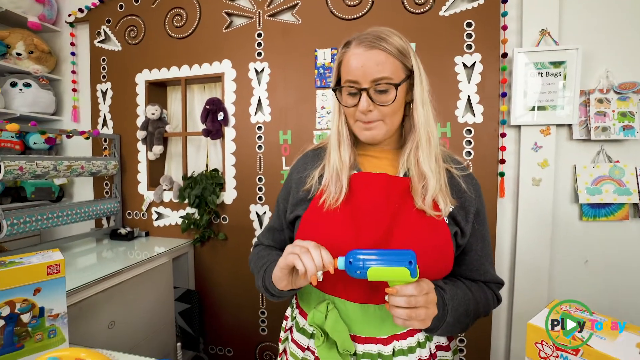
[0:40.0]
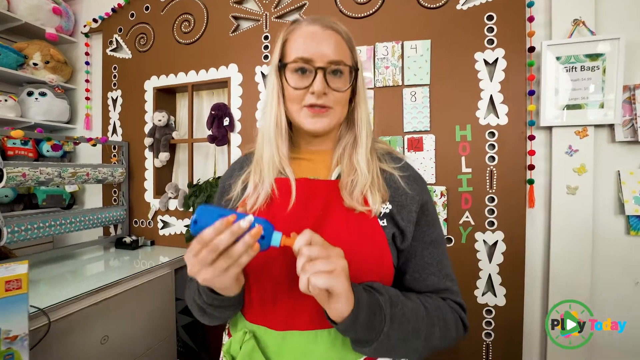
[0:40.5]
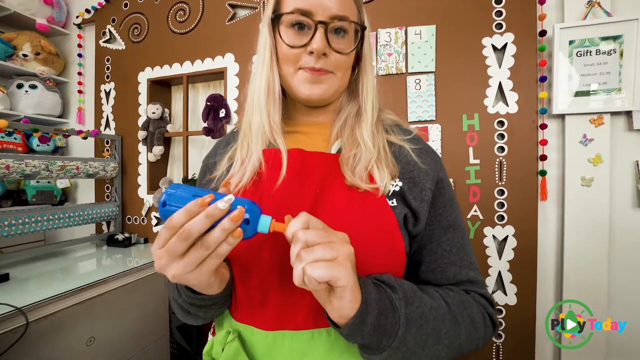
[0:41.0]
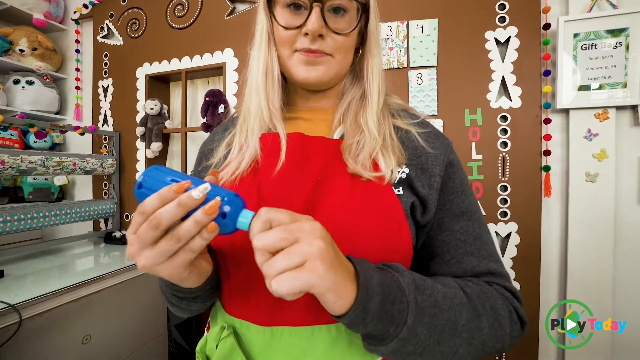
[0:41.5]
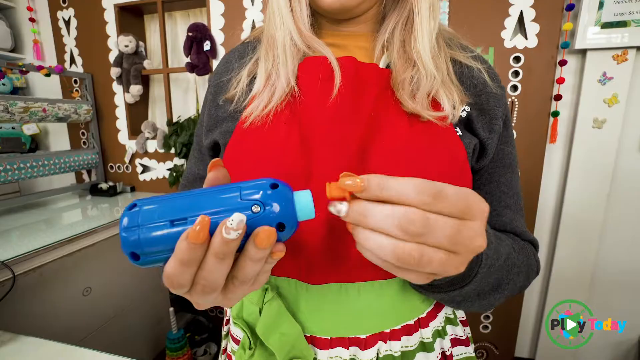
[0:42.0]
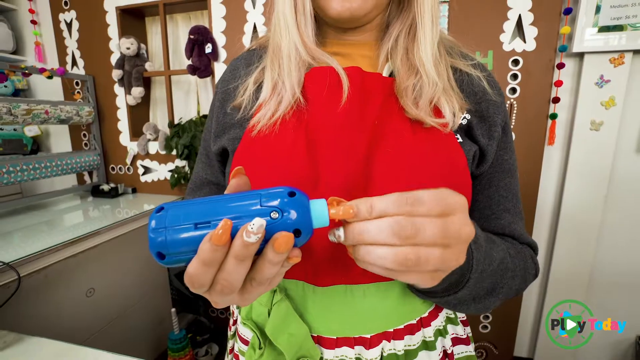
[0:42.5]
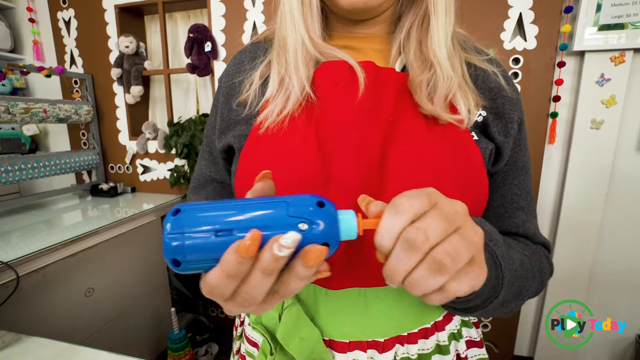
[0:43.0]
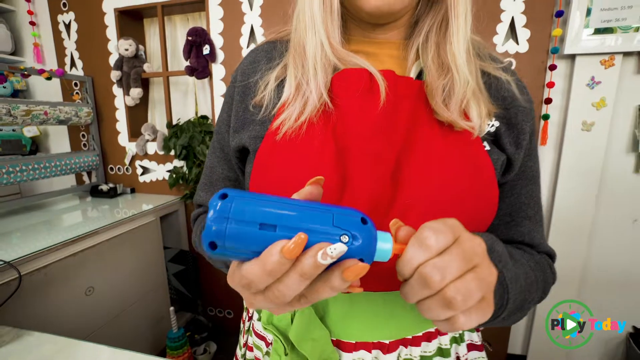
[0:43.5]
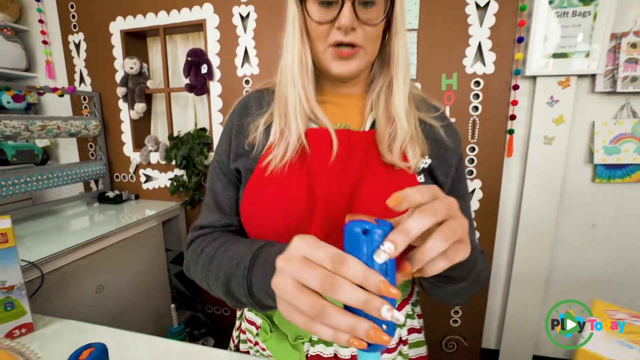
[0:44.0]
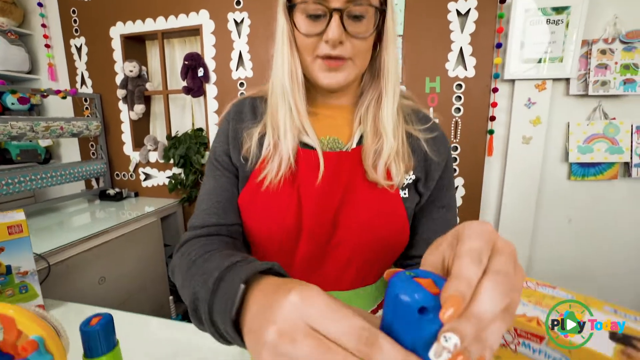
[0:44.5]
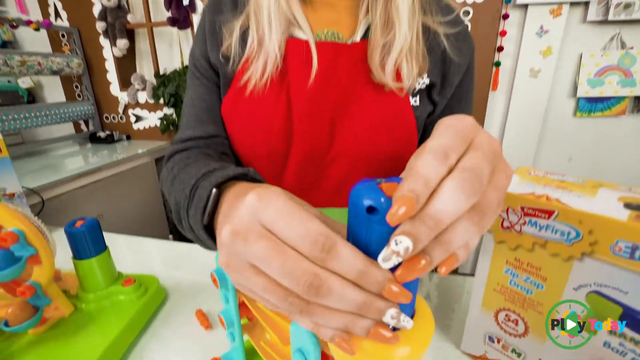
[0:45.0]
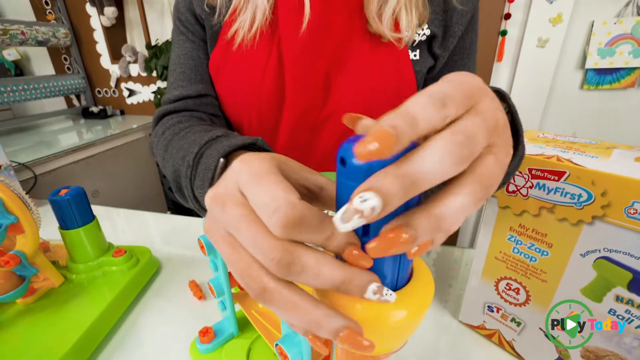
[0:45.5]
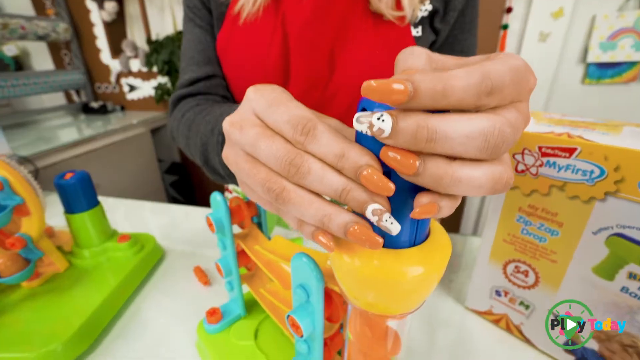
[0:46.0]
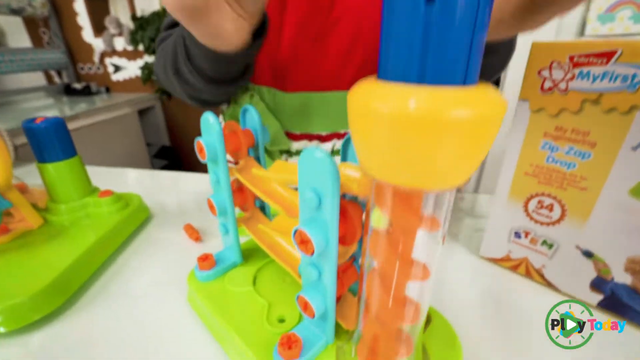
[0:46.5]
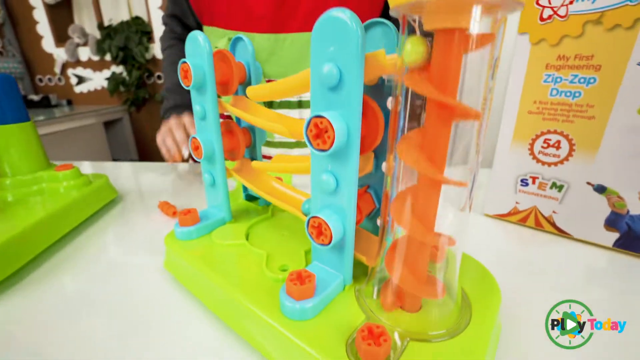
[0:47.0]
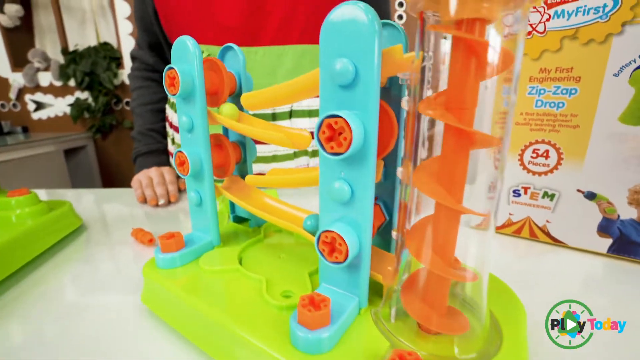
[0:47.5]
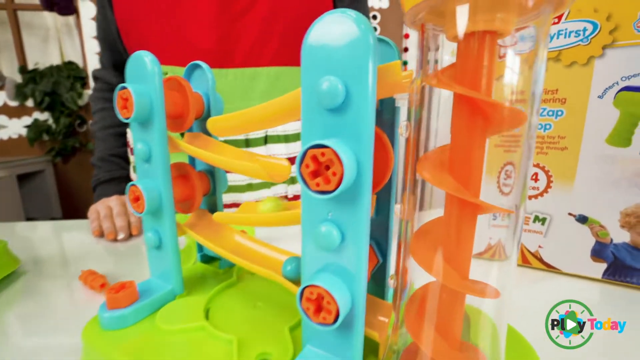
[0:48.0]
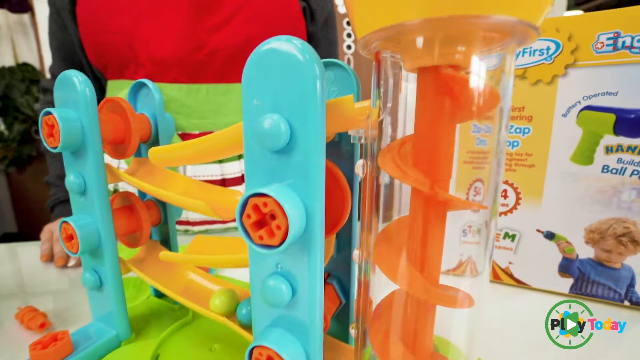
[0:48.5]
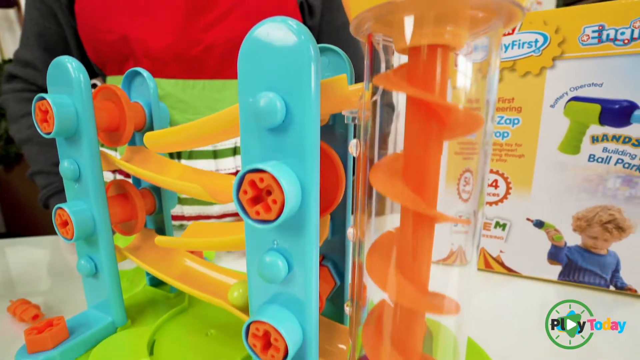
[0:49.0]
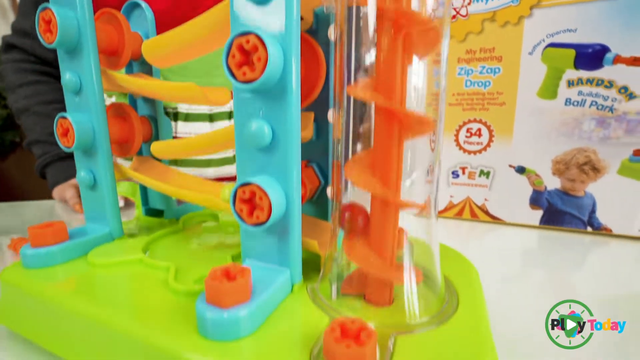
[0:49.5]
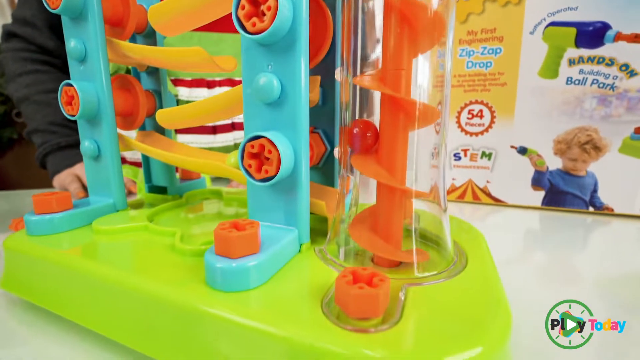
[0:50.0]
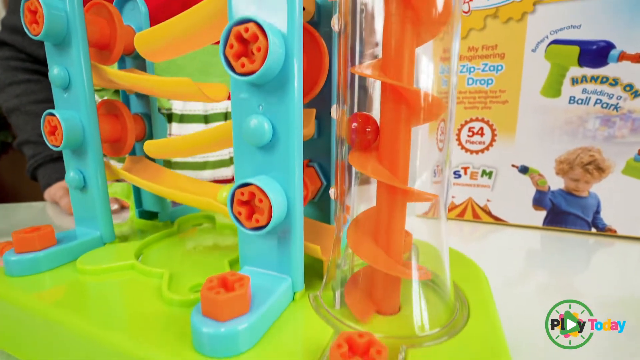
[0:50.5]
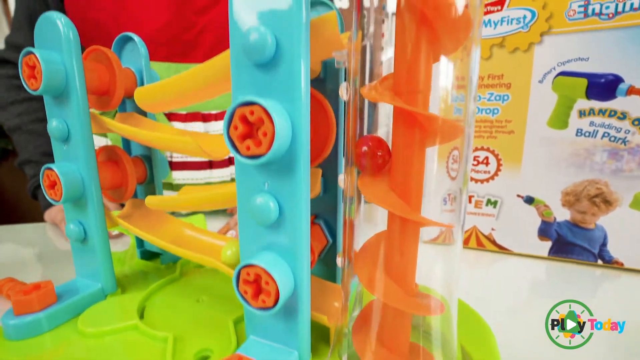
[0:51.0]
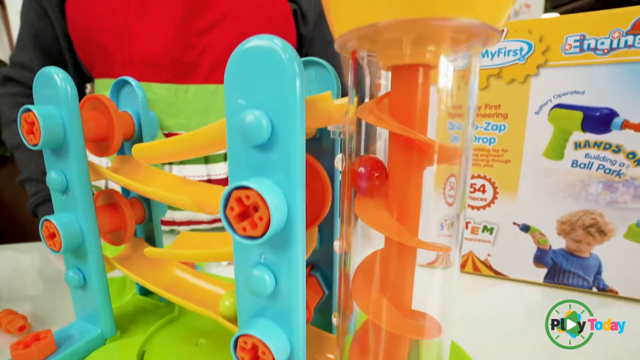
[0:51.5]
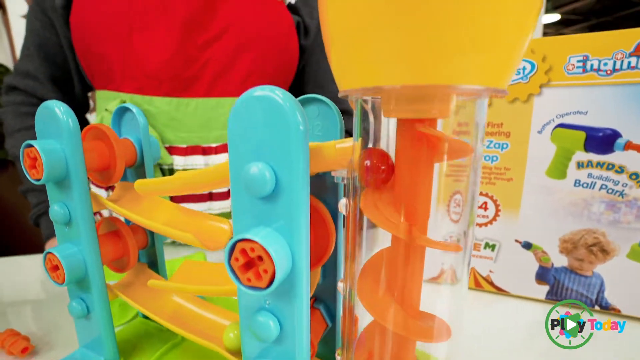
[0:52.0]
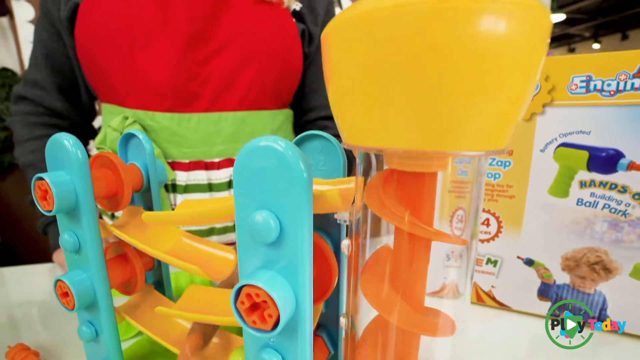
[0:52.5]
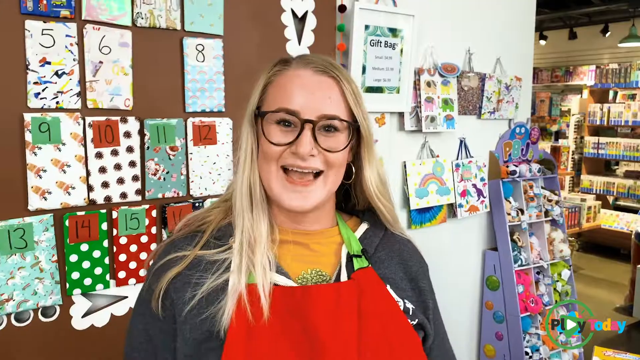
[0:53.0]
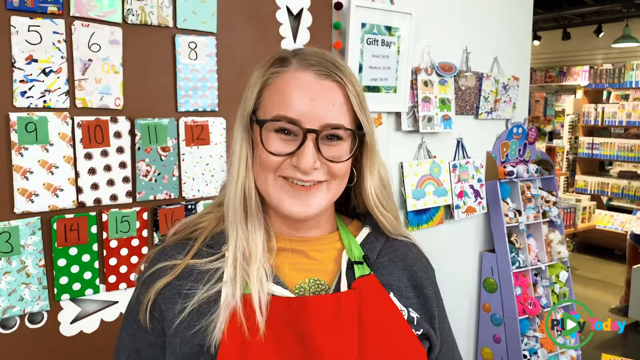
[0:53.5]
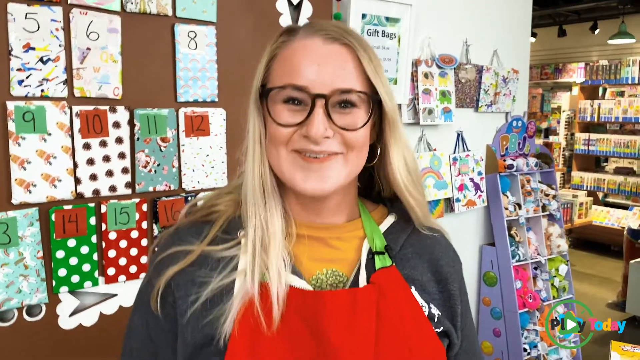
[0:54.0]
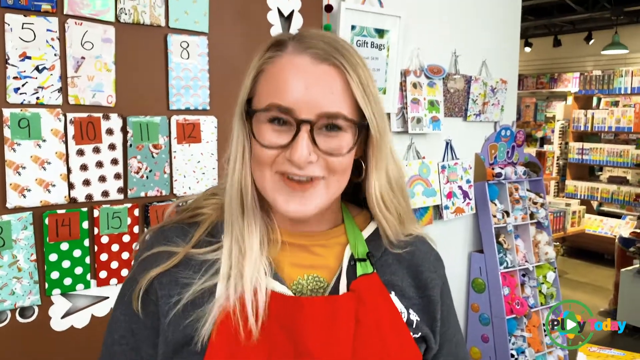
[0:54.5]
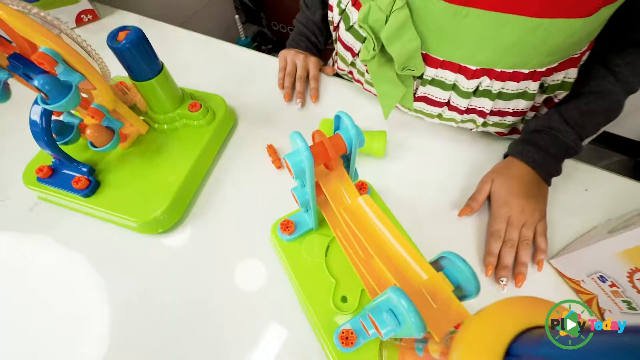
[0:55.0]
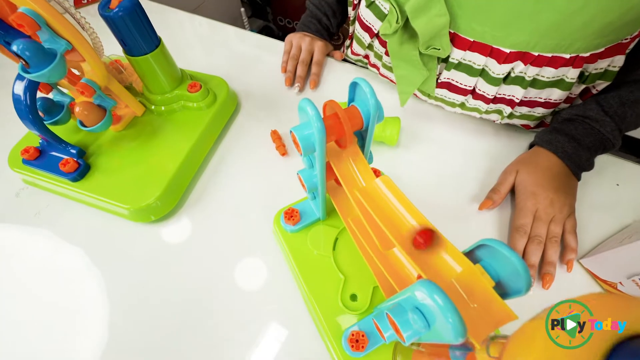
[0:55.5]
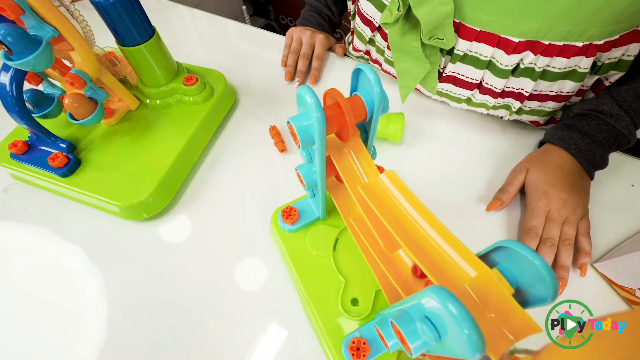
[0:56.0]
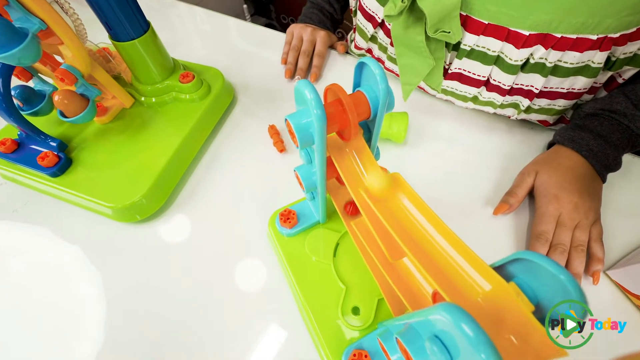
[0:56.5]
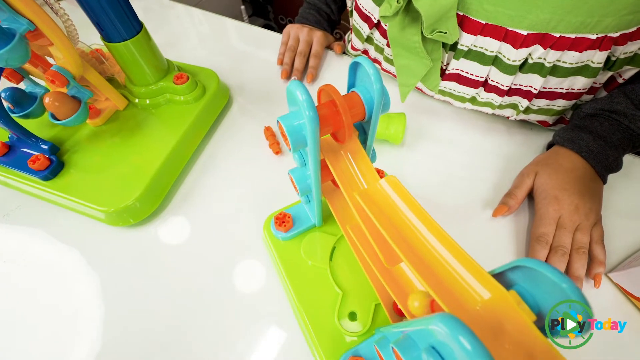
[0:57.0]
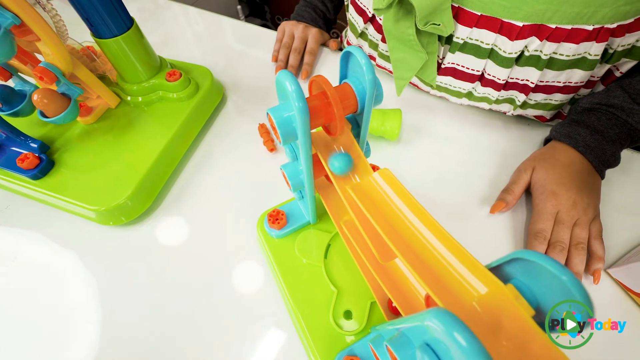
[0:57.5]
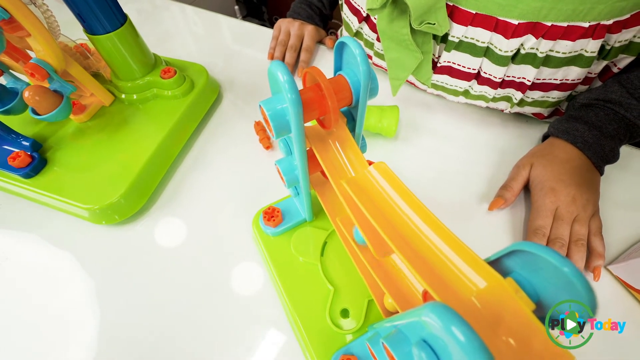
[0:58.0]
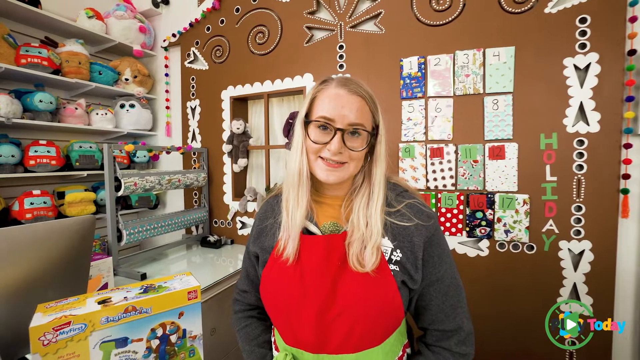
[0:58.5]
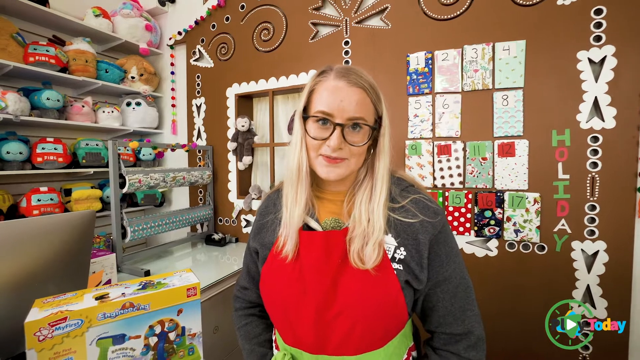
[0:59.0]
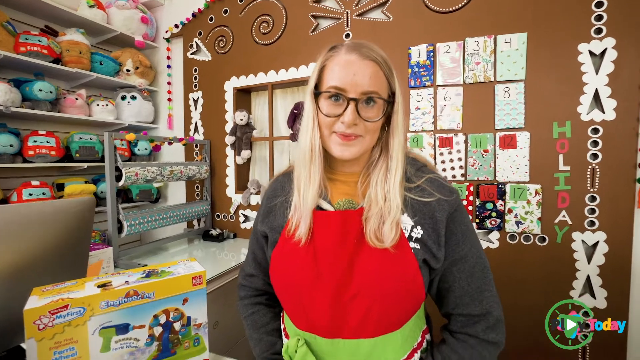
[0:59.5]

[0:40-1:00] The Caucasian woman holds a toy and demonstrates how it works, putting it on another toy to show how it is played with. She holds the toy gun and puts it on the main toy. The background has changed very little; she is still working behind the counter, and the shot is closer than at the start of the video. She is alone, with no other people visible.